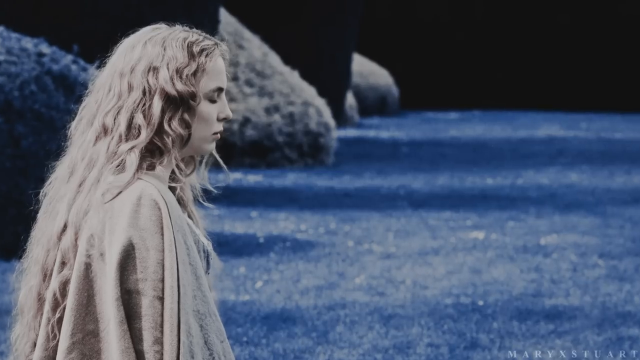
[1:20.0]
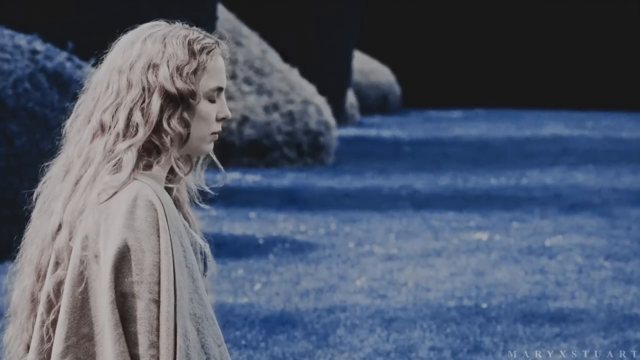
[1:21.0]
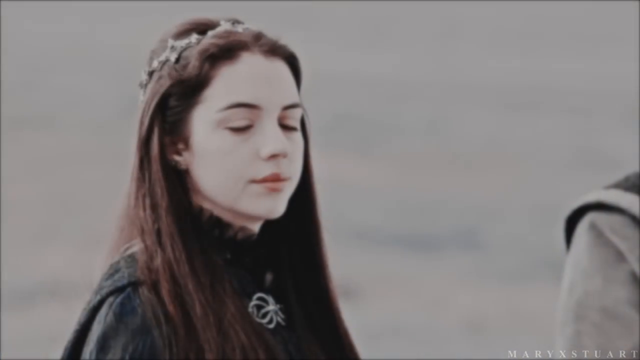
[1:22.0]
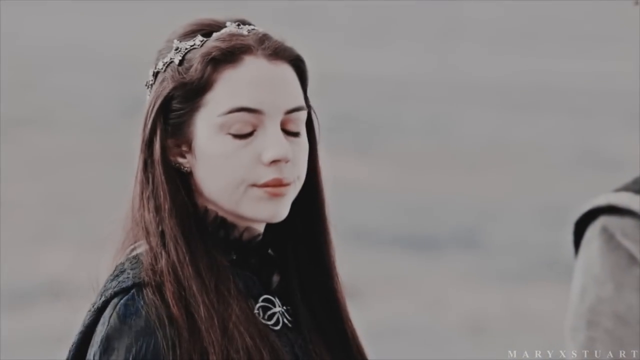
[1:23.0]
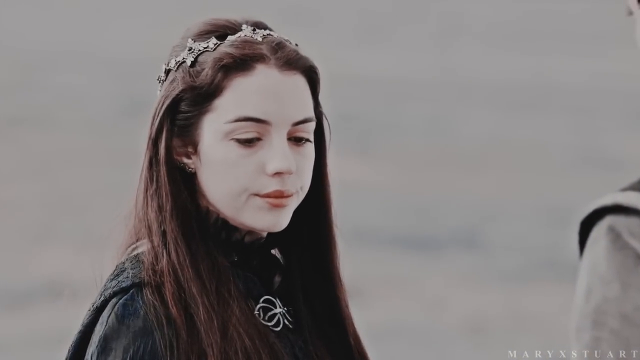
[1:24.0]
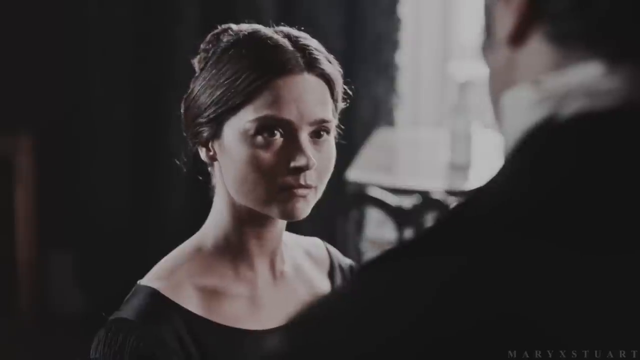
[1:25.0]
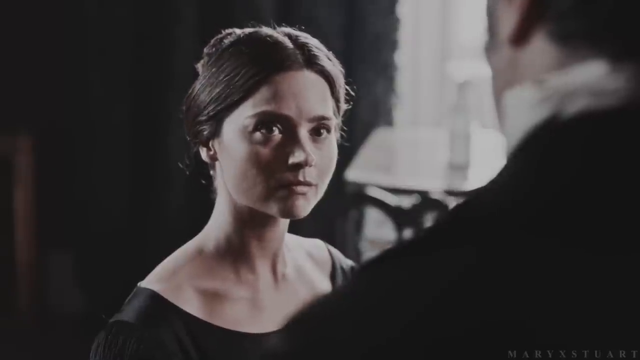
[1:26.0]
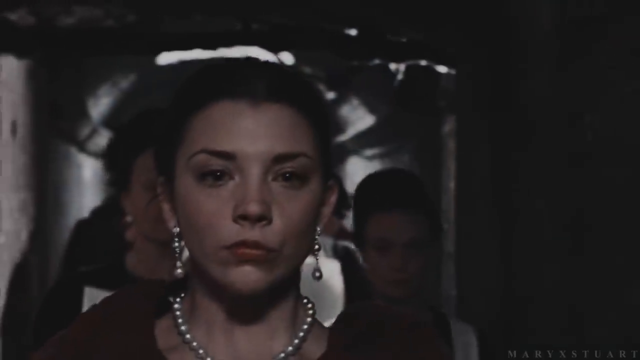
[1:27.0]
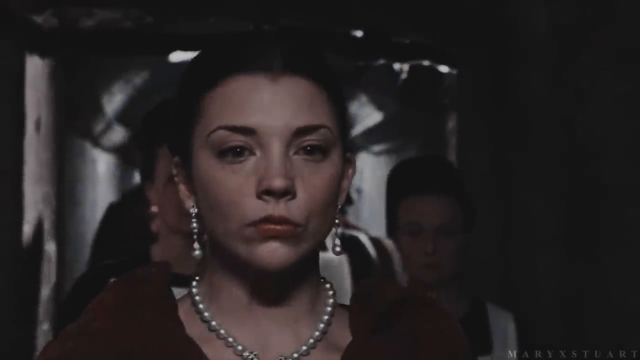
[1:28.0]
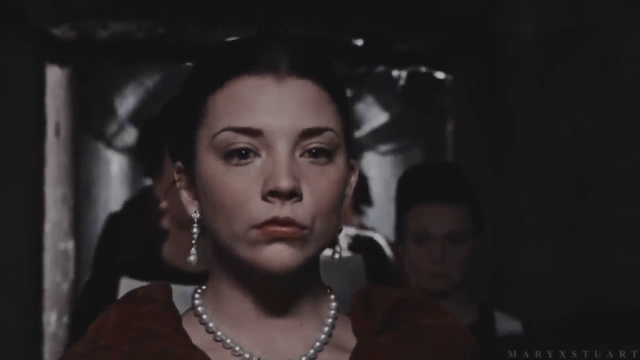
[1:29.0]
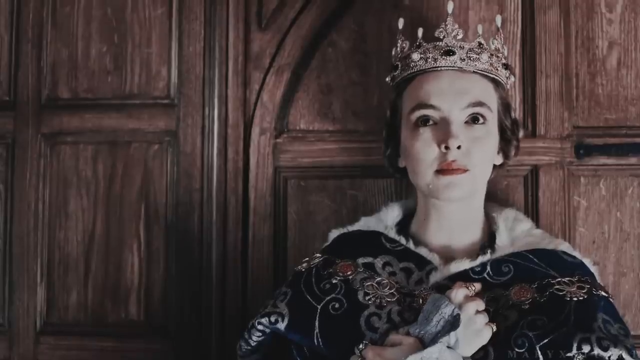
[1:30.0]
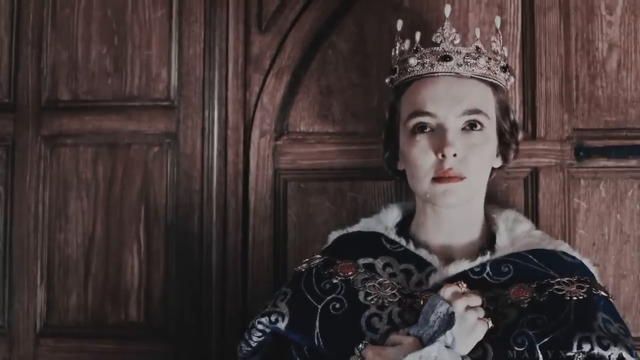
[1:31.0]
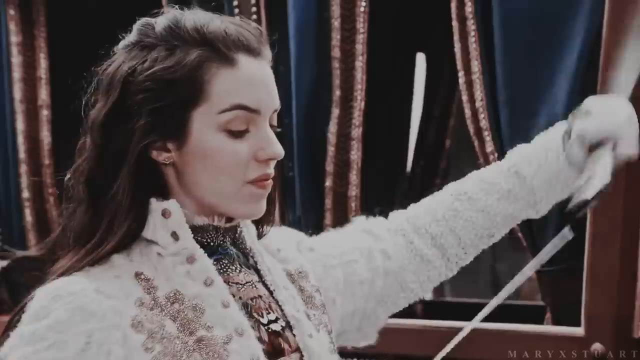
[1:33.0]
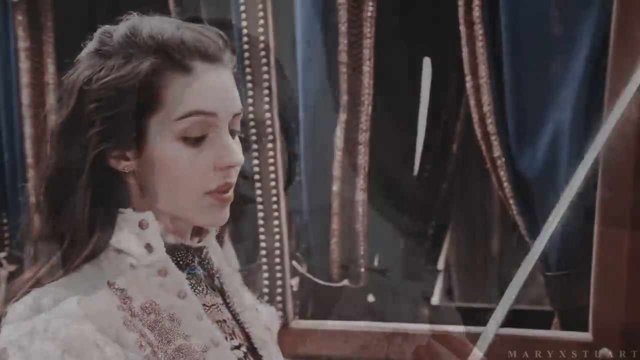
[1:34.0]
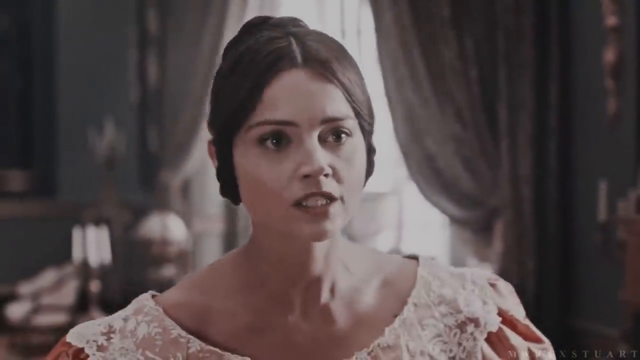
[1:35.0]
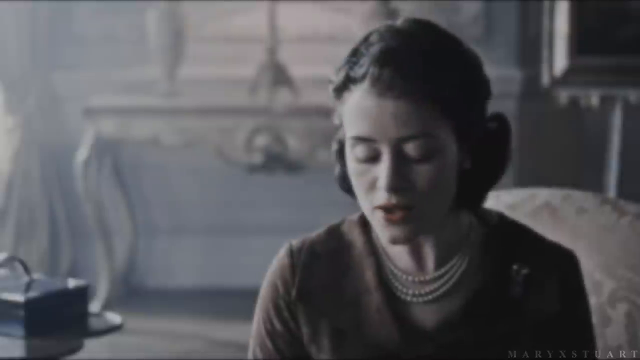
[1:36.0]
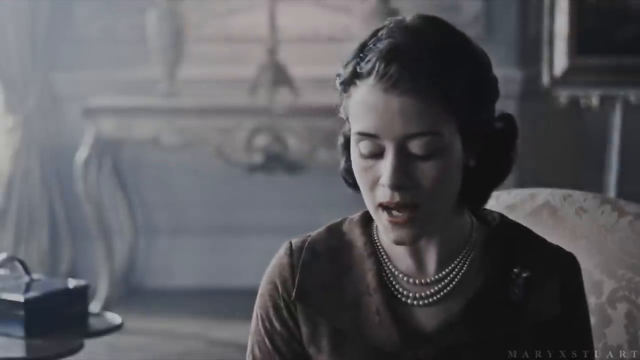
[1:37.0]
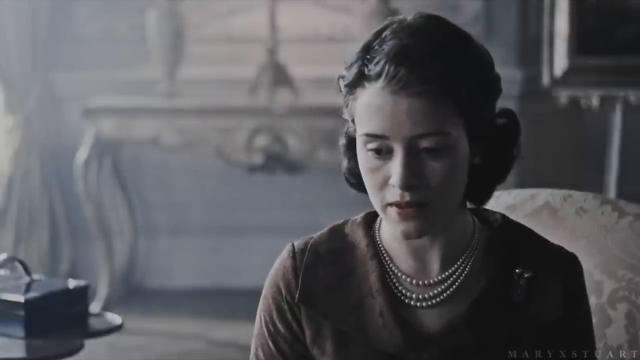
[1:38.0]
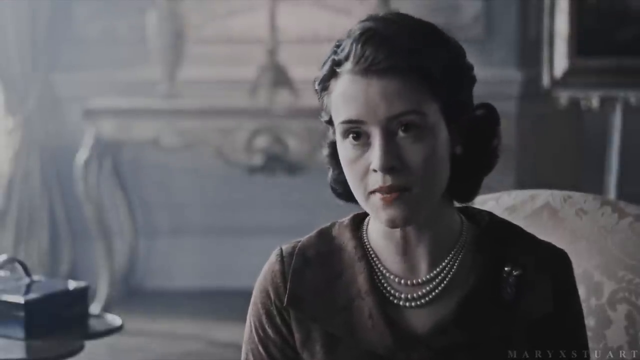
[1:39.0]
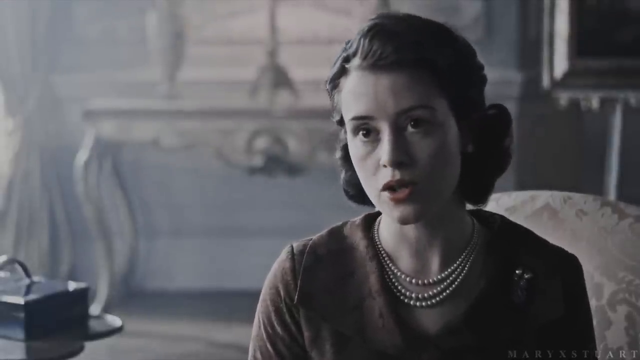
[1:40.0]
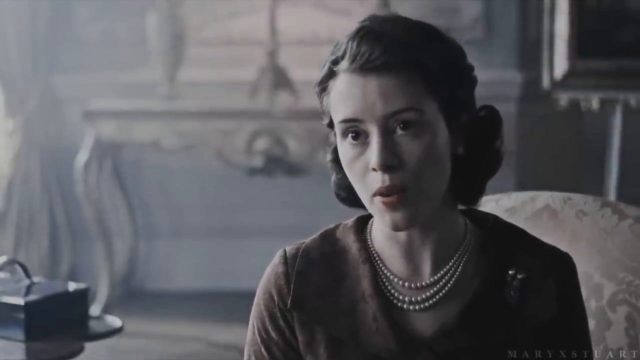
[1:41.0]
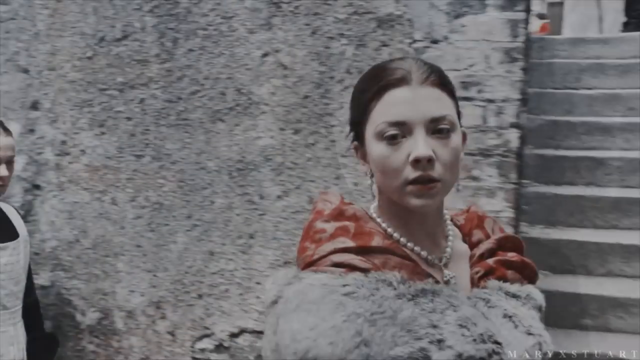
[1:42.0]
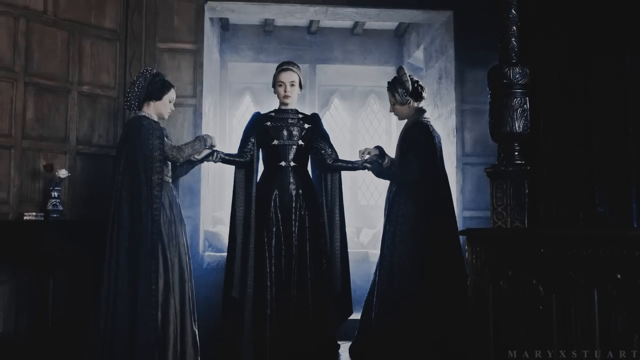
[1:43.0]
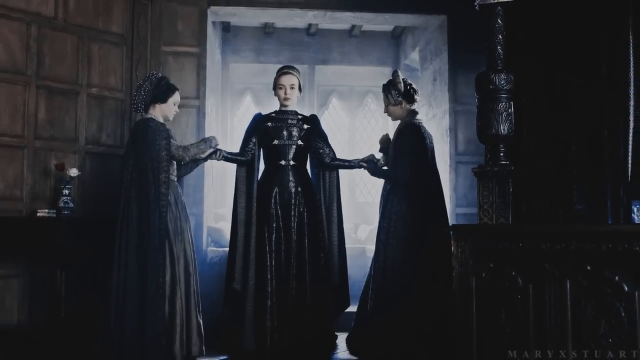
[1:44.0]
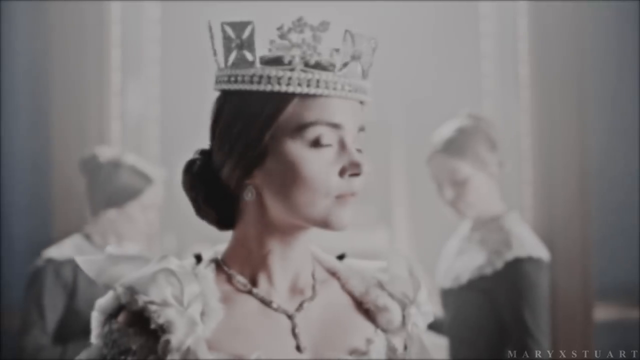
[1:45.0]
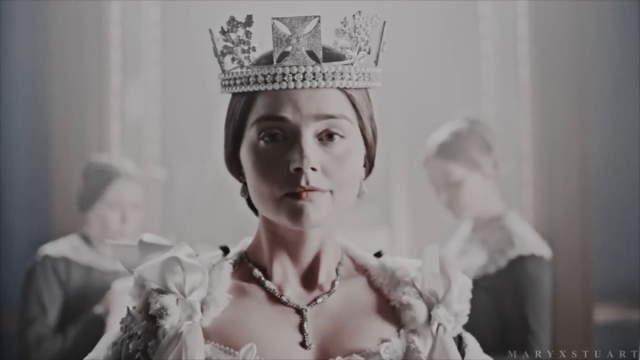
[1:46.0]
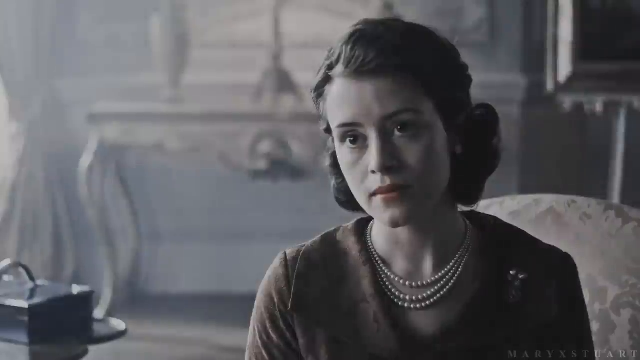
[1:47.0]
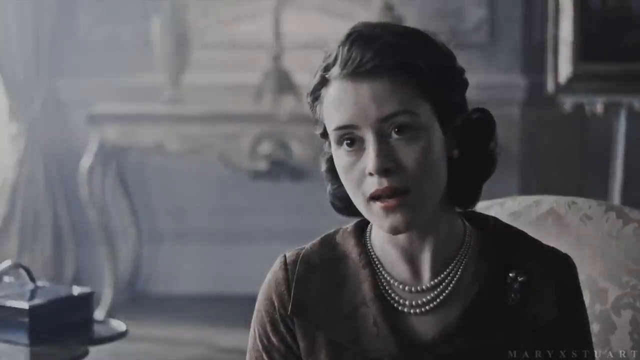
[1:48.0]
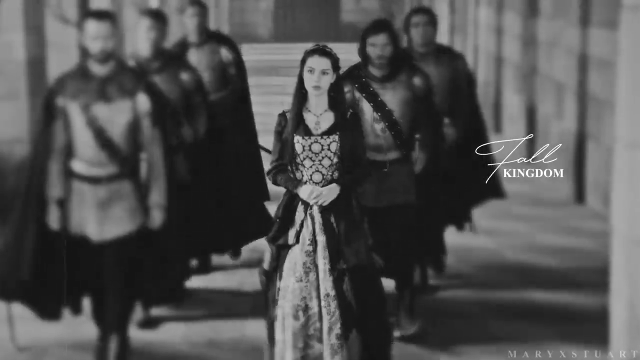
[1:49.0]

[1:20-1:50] A woman in the wide-format frame appears to be walking from the left toward the right, but as the shot goes on she is not actually walking. She looks kind of depressed and solemn, with long blonde hair down to about her mid back and something like an off-white robe over her shoulder. She just kind of tilts her head to the left and closes her eyes, looking pretty sad. The video then shows a different woman who is quite young, probably around 18, with her body facing right and her head turned toward the lower right corner. She has long brown hair and kind of a tiara on her head, and she appears to wear a dark-colored robe. She slightly closes her eyes, then slowly opens them. In the next scene, a woman wearing long, pearl-like but golden earrings is seen from the neck up; she also wears a necklace of pearls that look kind of golden. She walks toward the camera, looking kind of upset, with silhouettes of people lingering behind her on both sides.